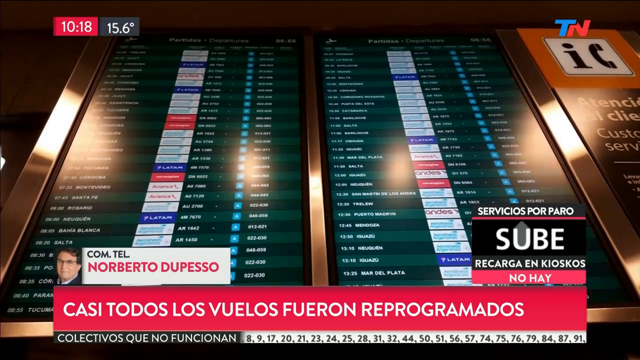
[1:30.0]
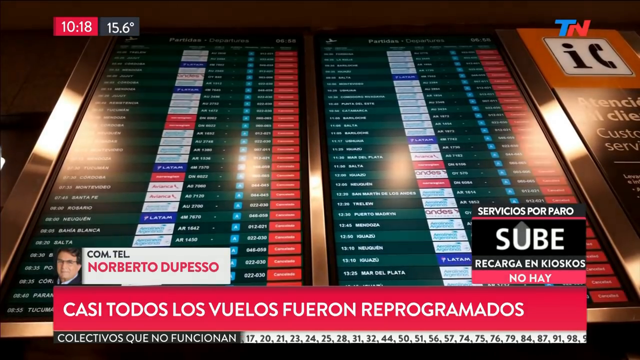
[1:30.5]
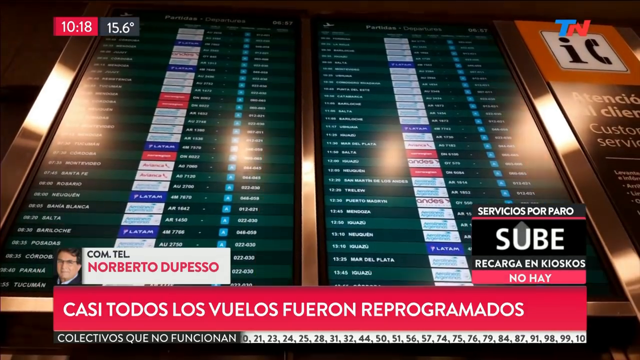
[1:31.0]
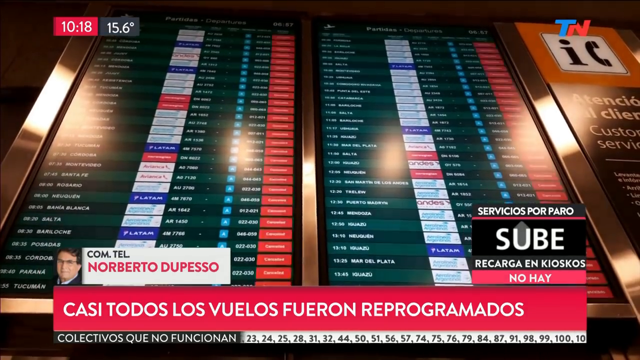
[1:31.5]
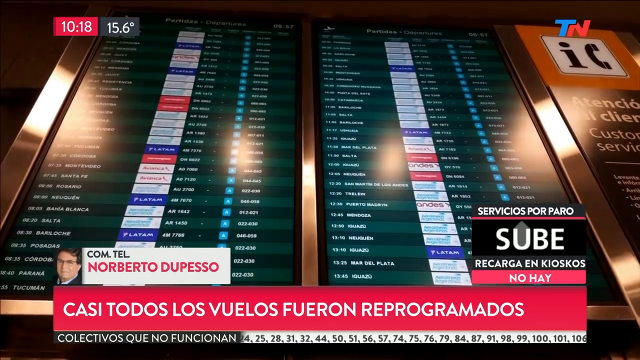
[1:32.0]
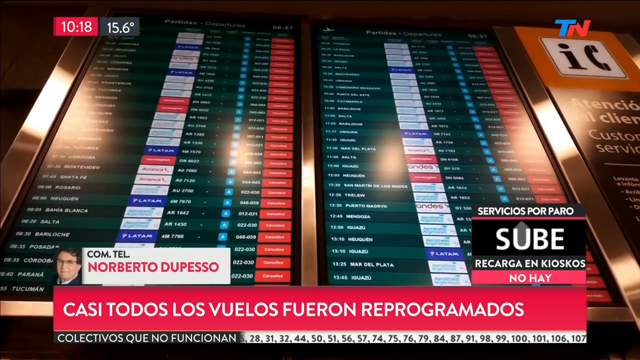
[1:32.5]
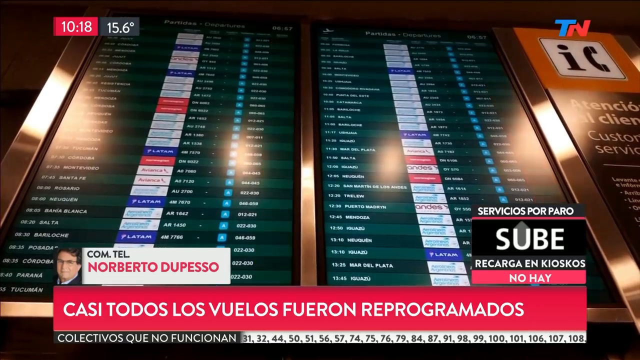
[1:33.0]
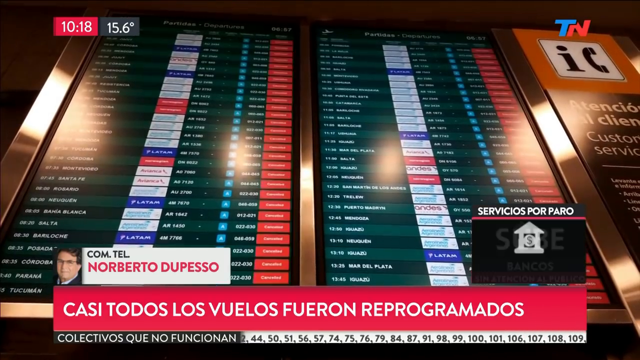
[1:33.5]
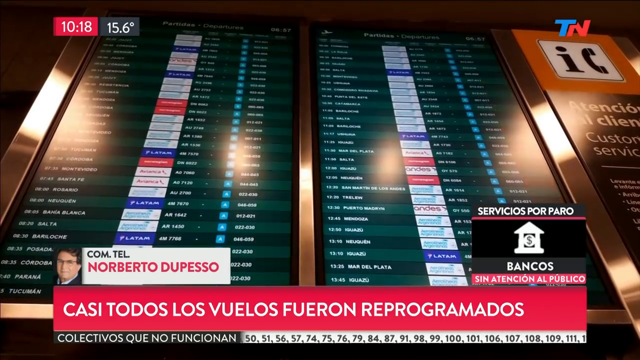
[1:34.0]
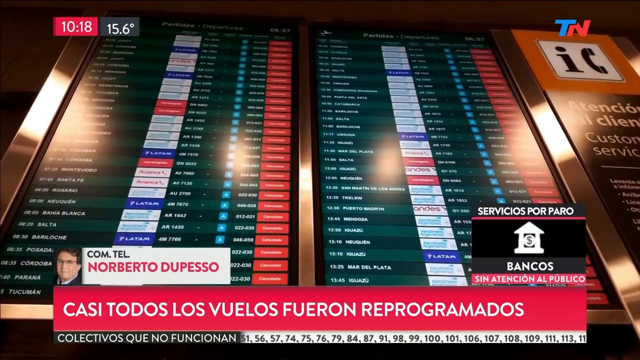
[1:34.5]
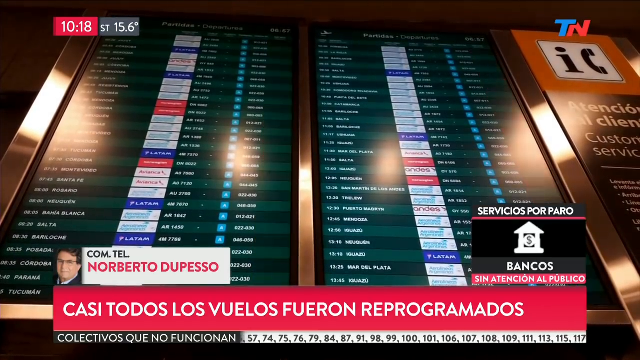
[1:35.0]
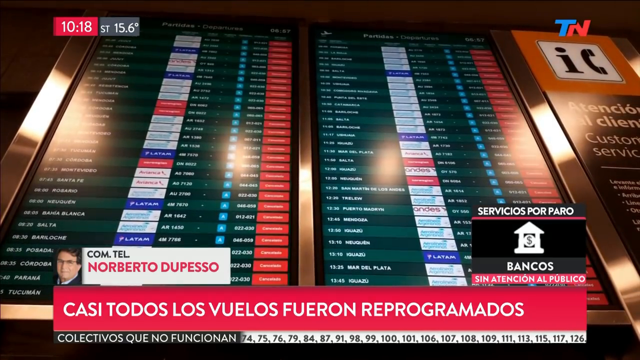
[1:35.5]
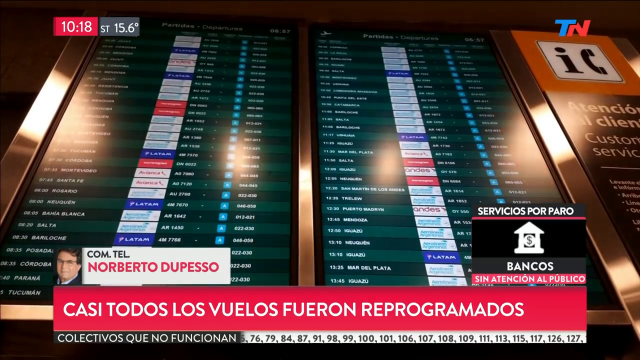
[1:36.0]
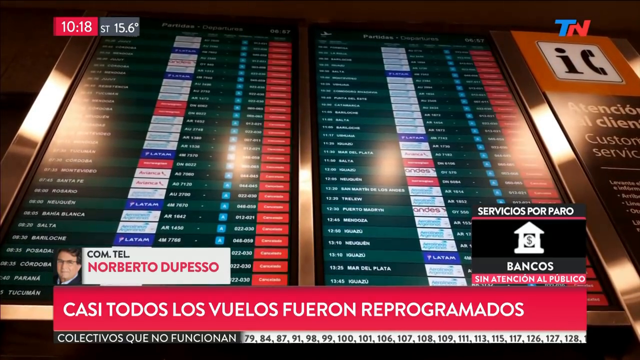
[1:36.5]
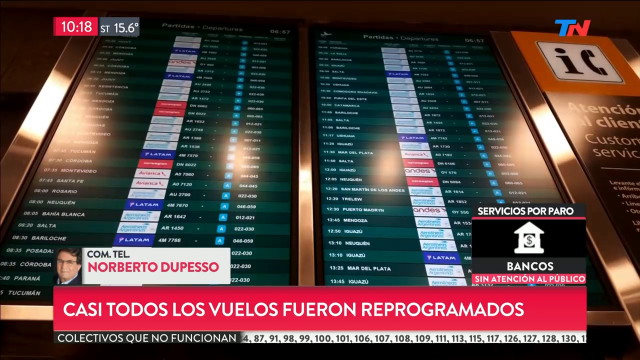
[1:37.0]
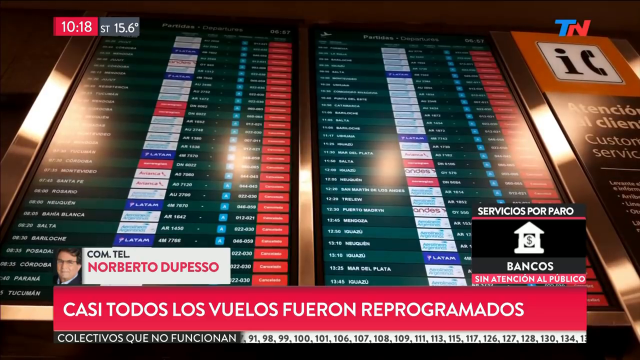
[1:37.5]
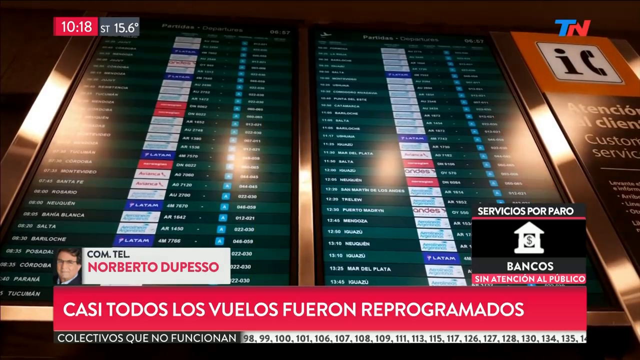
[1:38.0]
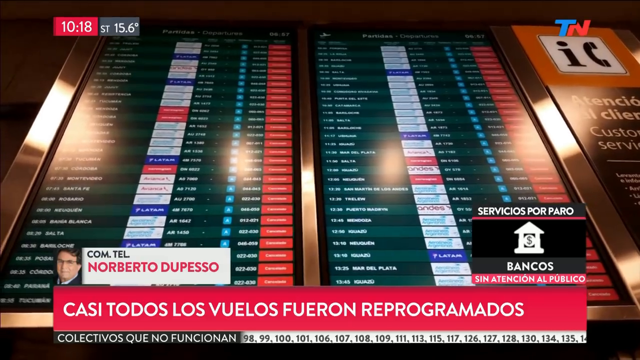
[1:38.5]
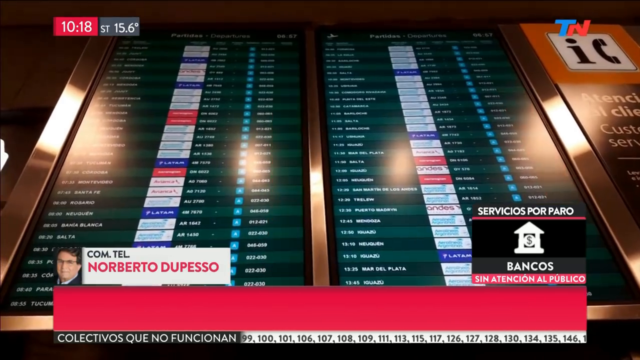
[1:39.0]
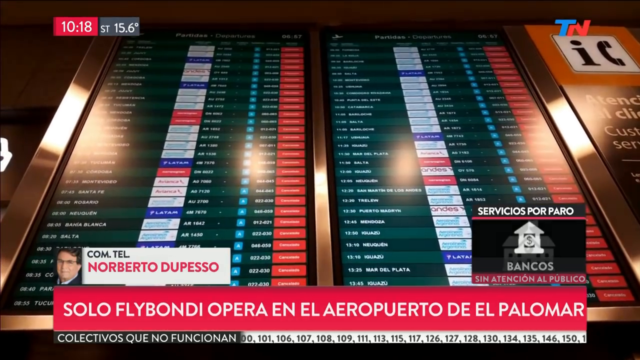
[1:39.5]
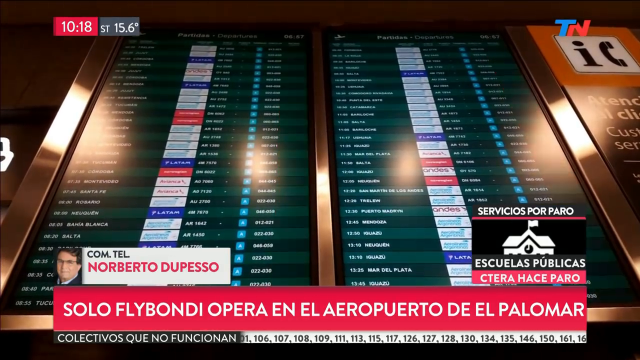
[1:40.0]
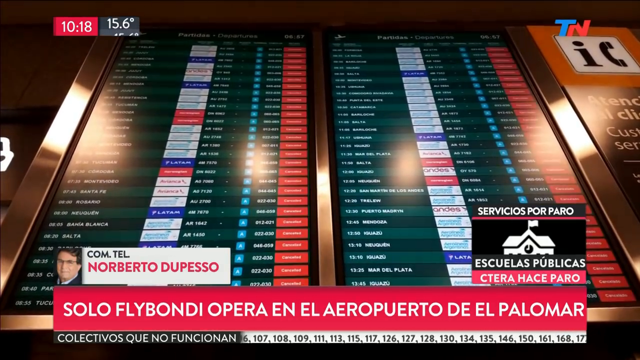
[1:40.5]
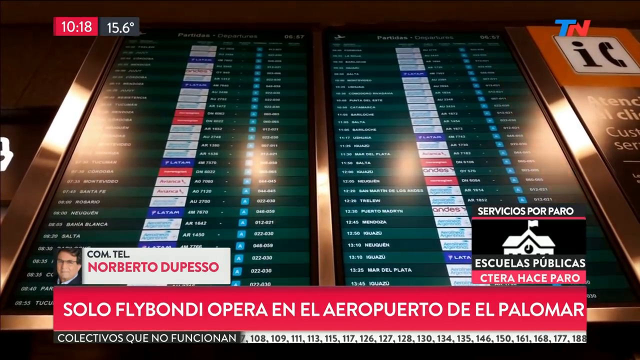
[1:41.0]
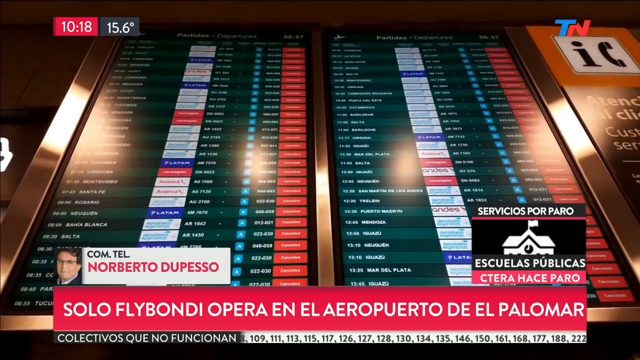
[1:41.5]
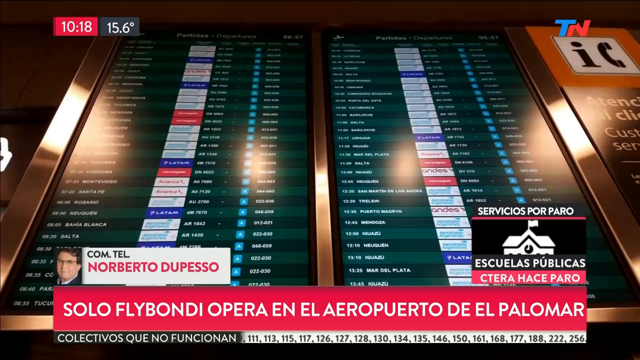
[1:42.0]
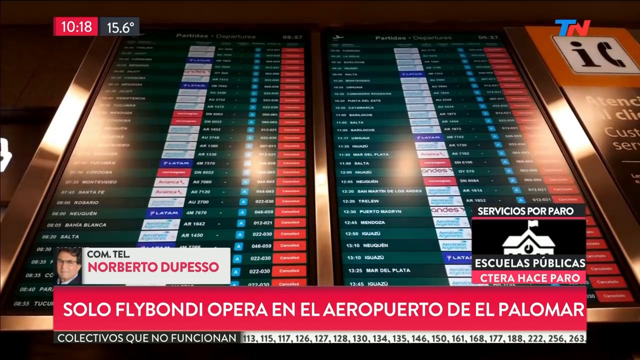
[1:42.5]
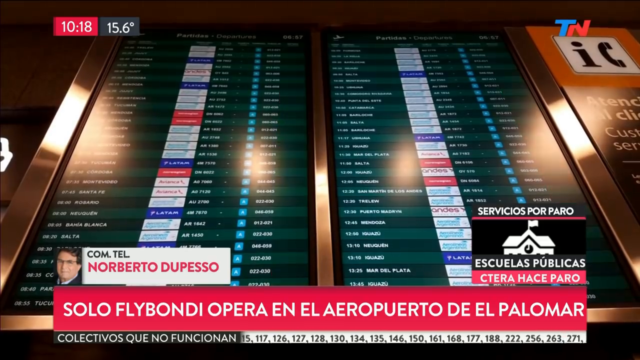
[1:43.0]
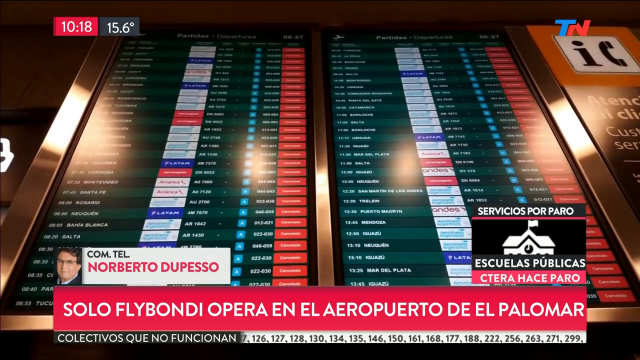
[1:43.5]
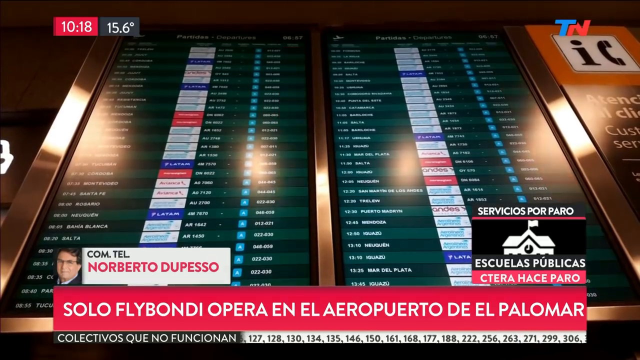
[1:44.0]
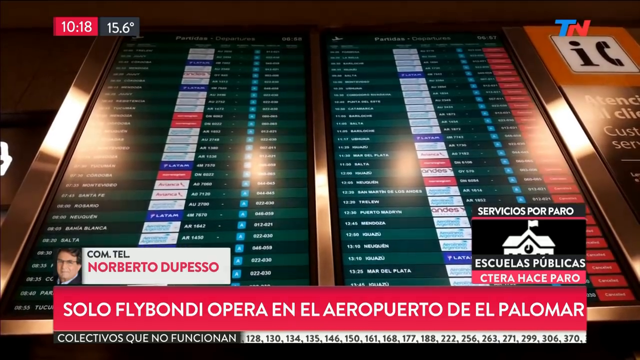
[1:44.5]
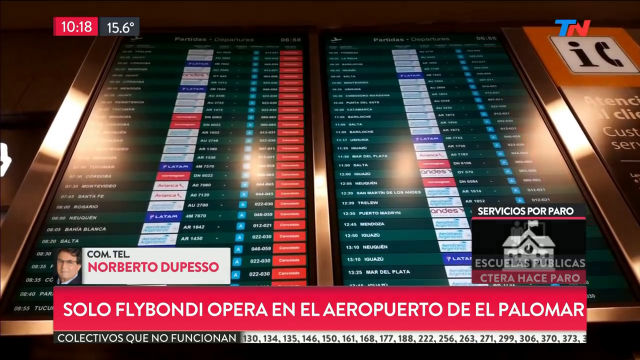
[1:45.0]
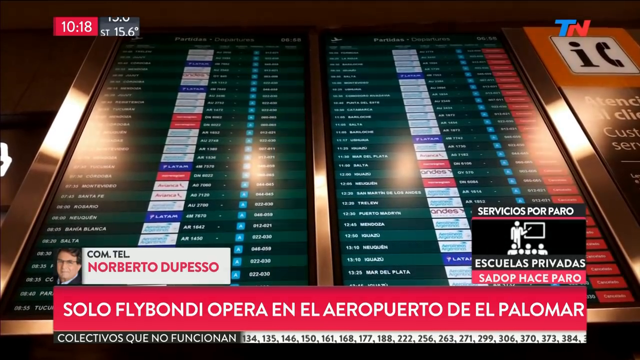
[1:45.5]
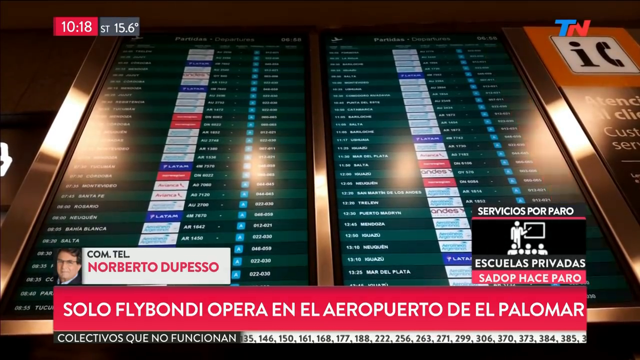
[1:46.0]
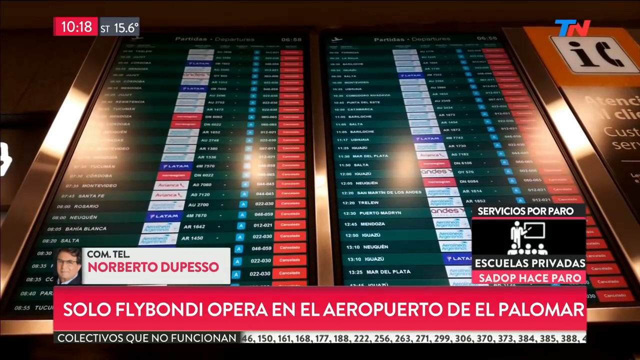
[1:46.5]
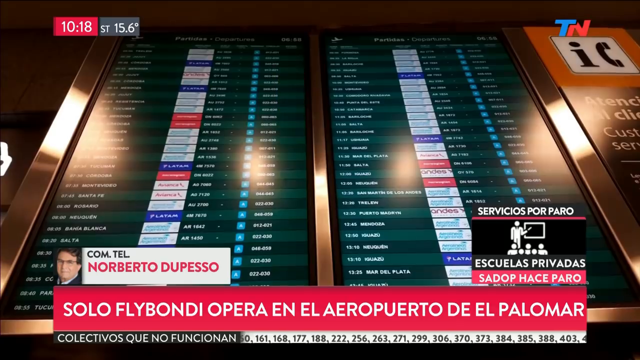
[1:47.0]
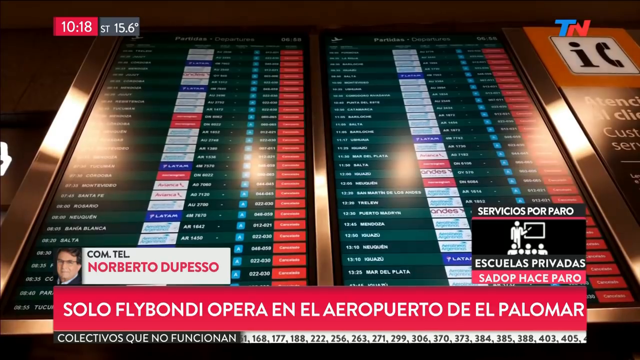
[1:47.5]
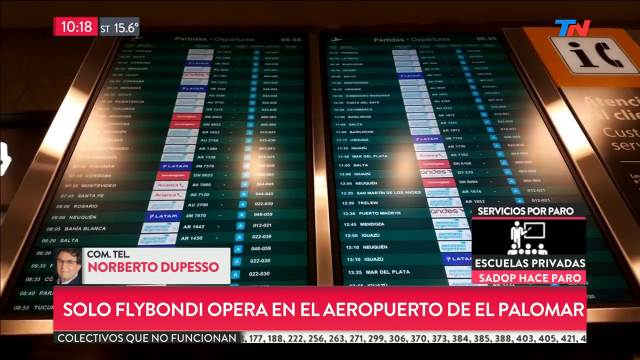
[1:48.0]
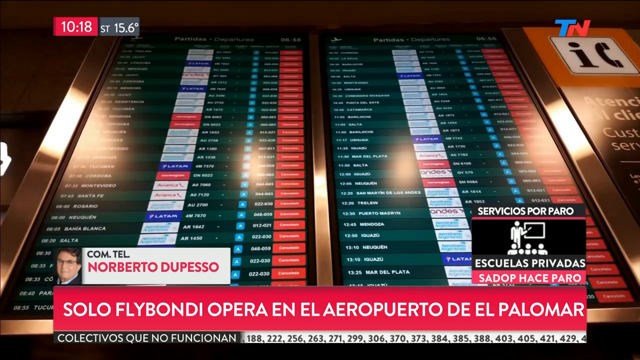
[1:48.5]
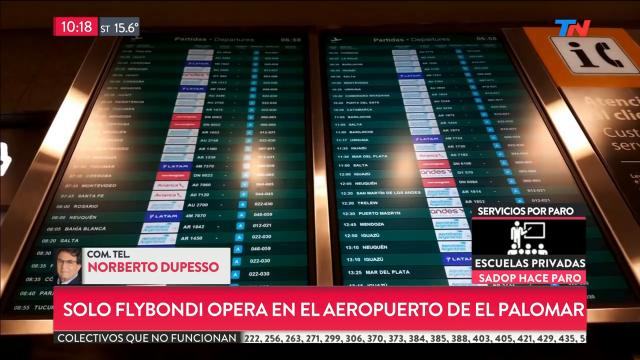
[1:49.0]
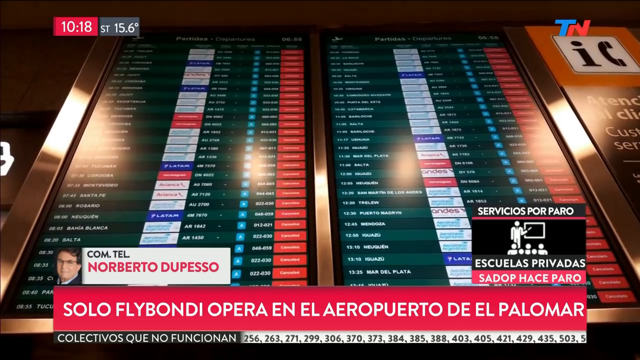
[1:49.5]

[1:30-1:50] The camera stays on the two big displays, showing how they change, along with lights on them; they apparently show passengers directions. The displays have words in red, blue and white against a background that mixes green and deep blue. The sides of the displays are golden, and a golden line runs through the middle. The camera changes angles but stays on the same display.